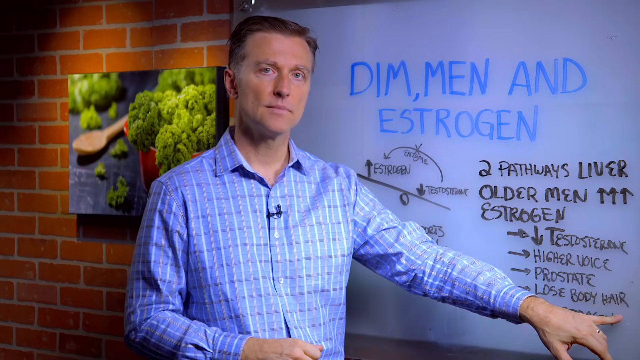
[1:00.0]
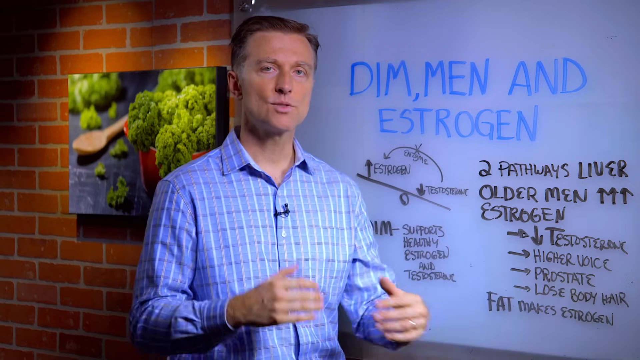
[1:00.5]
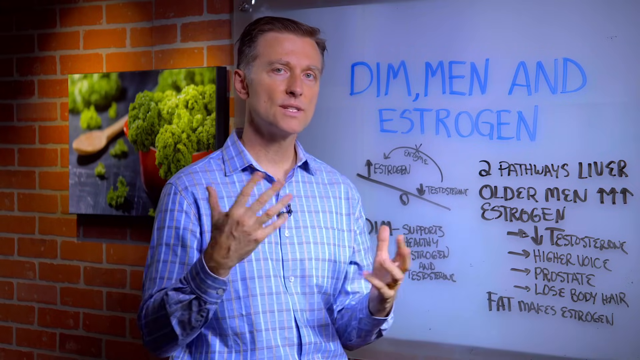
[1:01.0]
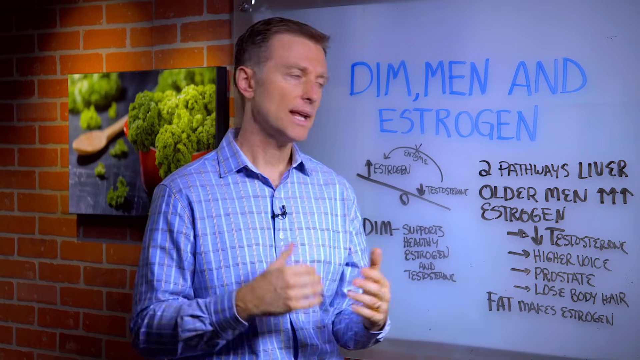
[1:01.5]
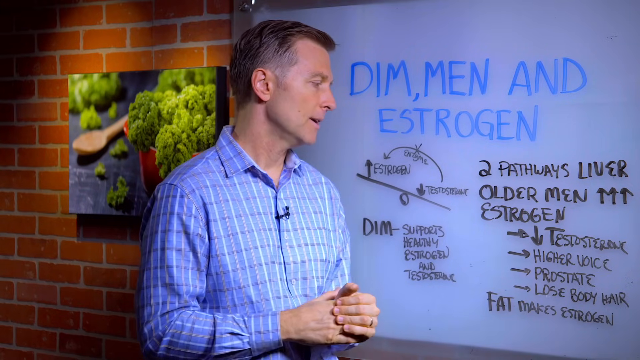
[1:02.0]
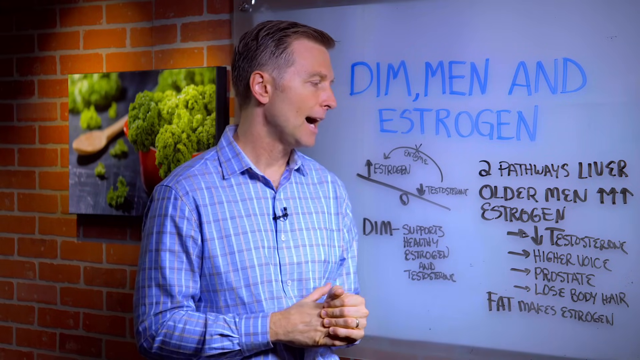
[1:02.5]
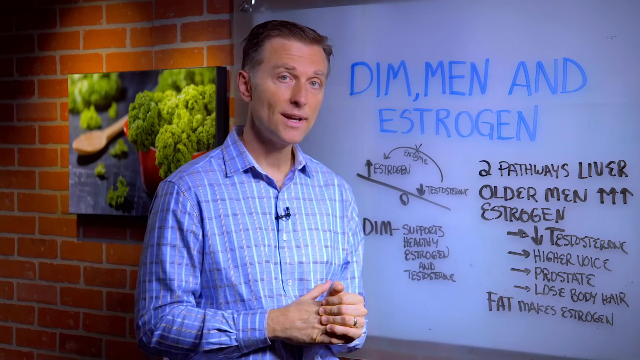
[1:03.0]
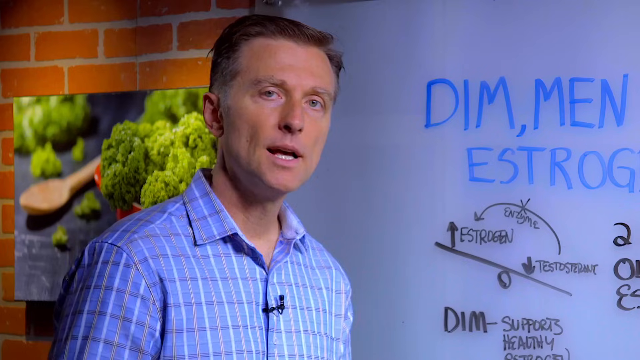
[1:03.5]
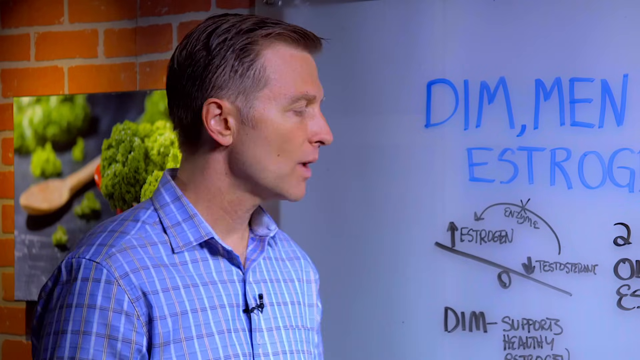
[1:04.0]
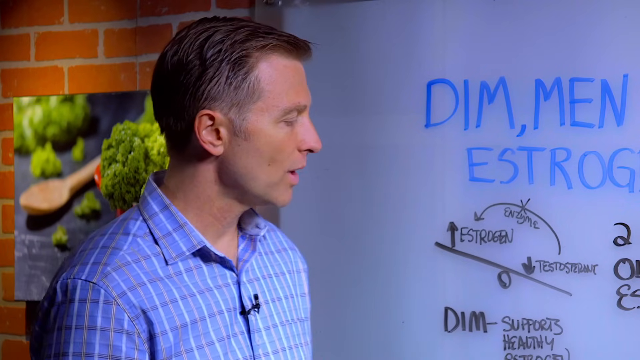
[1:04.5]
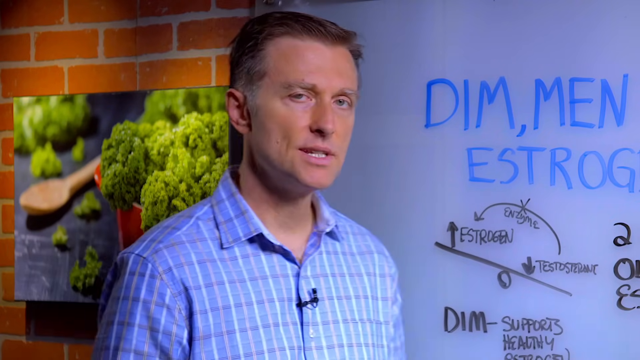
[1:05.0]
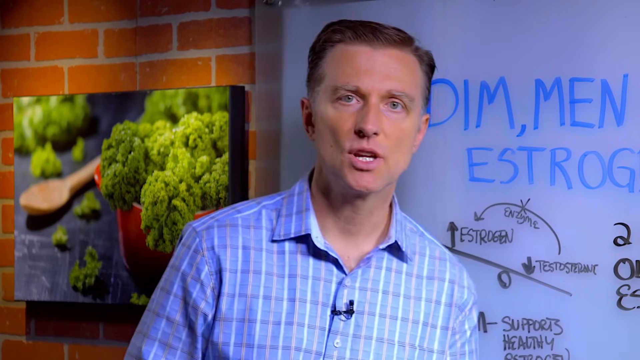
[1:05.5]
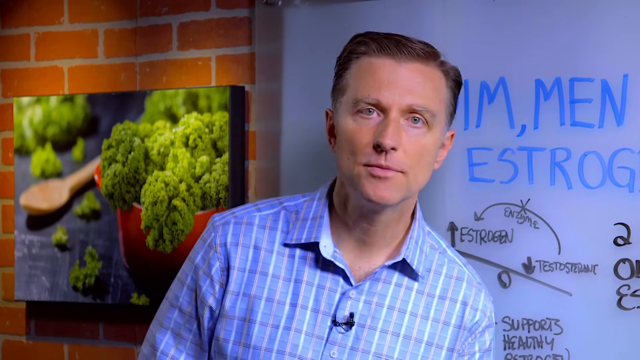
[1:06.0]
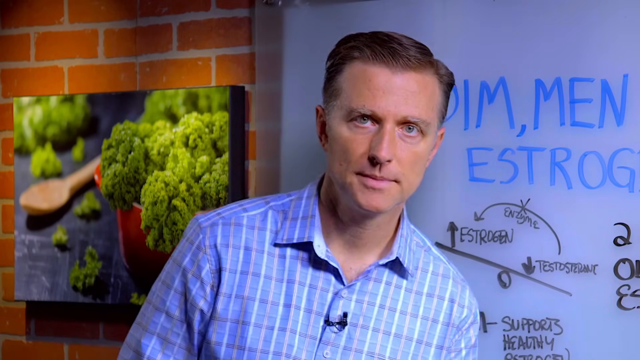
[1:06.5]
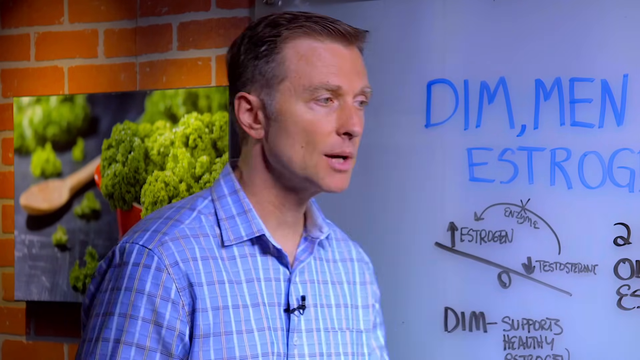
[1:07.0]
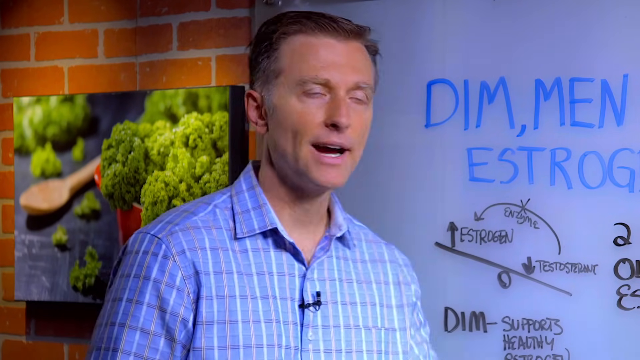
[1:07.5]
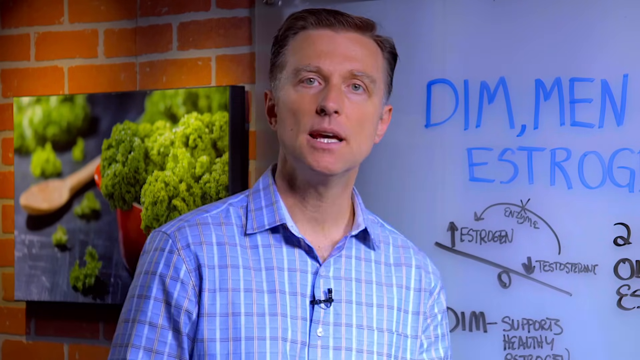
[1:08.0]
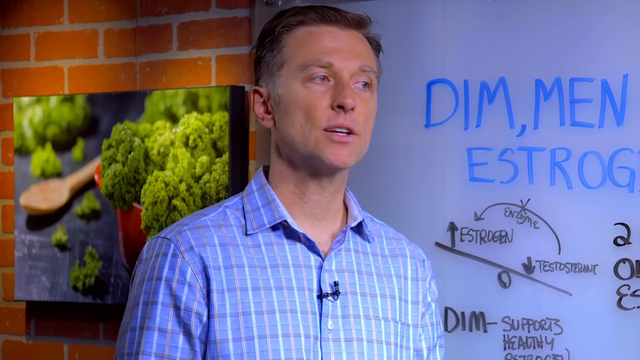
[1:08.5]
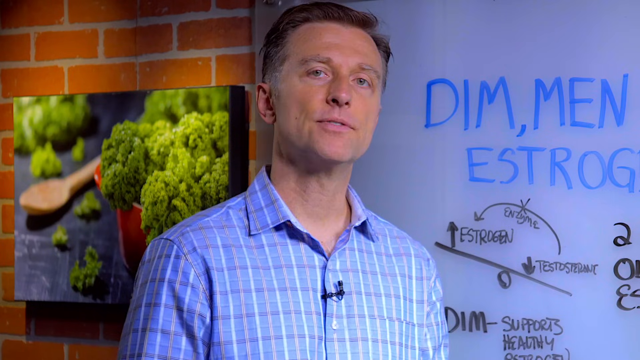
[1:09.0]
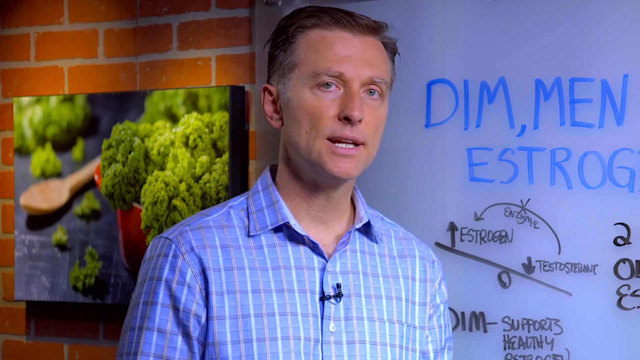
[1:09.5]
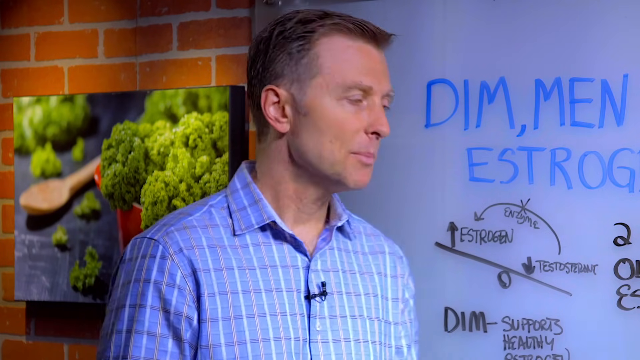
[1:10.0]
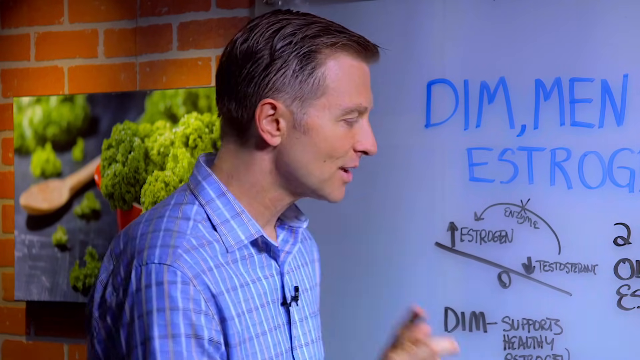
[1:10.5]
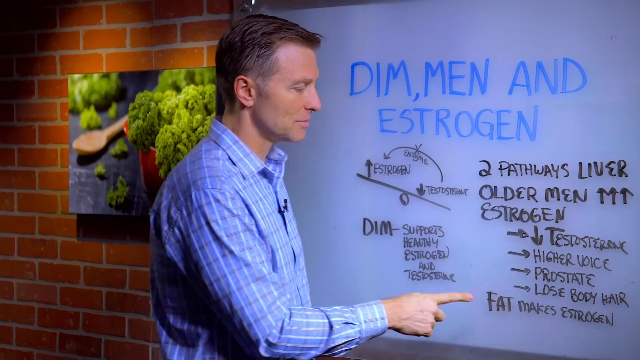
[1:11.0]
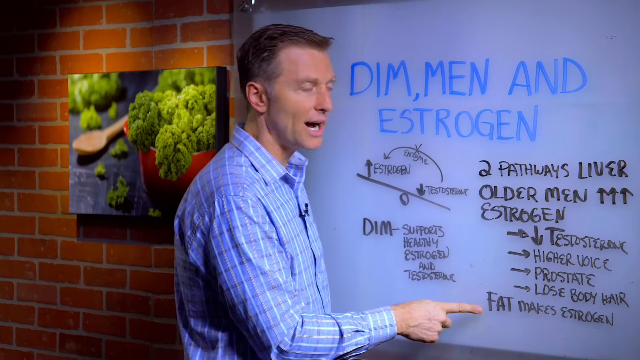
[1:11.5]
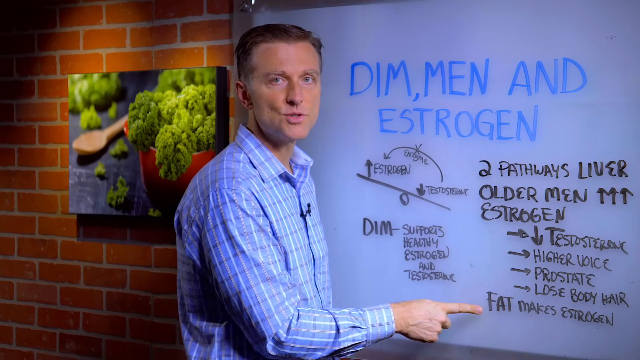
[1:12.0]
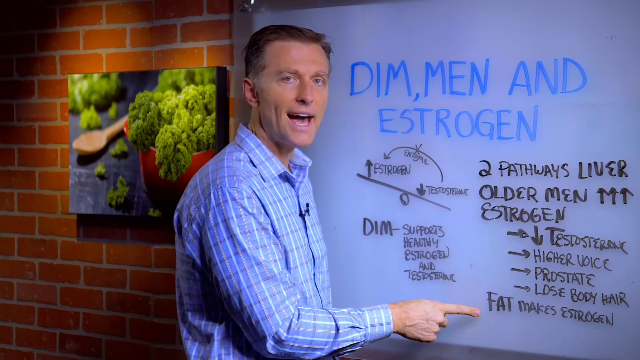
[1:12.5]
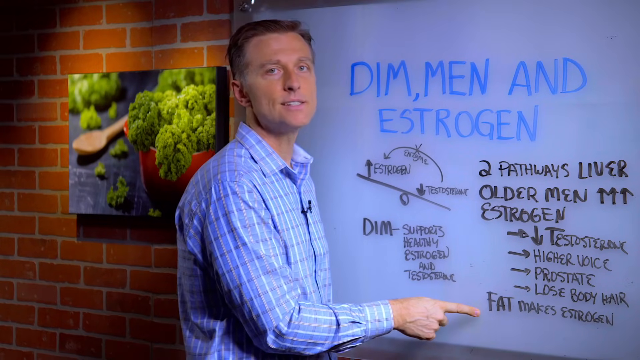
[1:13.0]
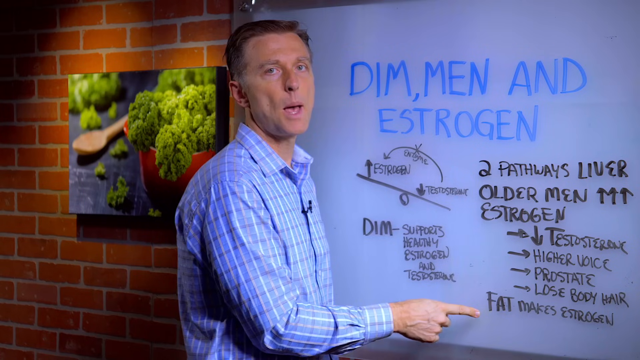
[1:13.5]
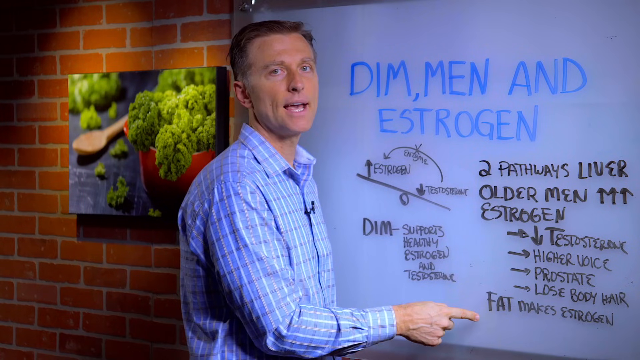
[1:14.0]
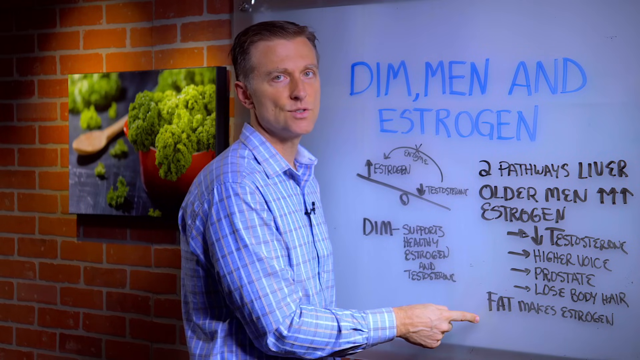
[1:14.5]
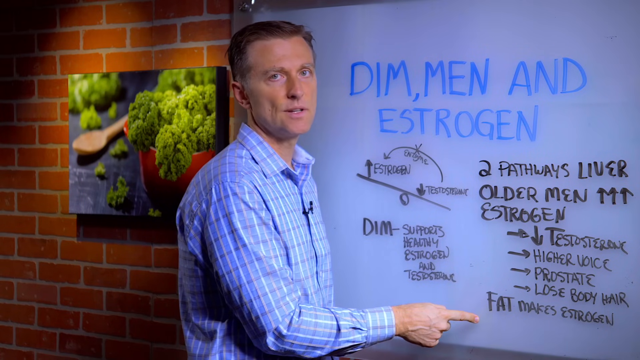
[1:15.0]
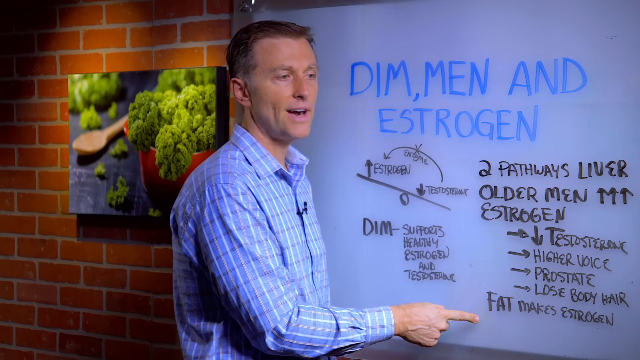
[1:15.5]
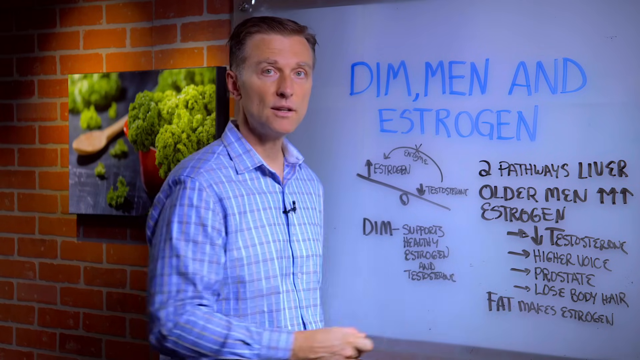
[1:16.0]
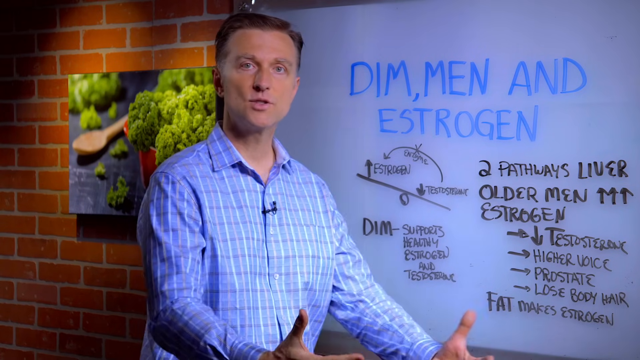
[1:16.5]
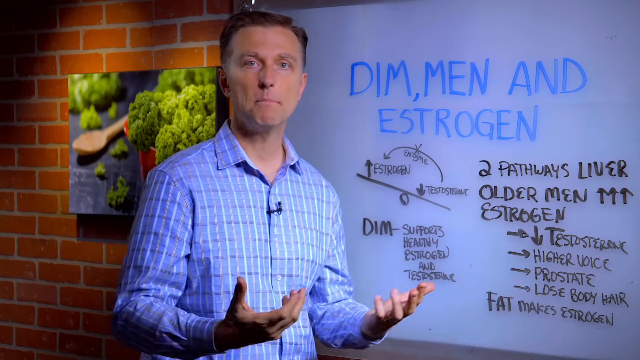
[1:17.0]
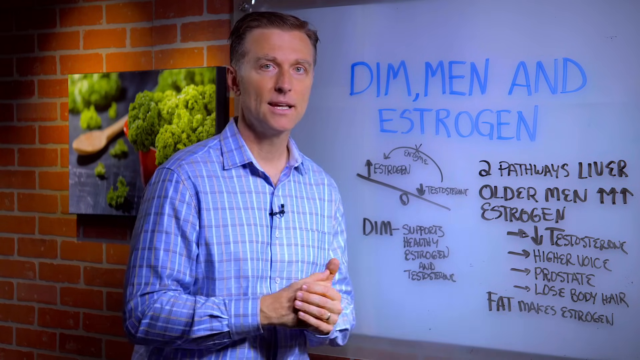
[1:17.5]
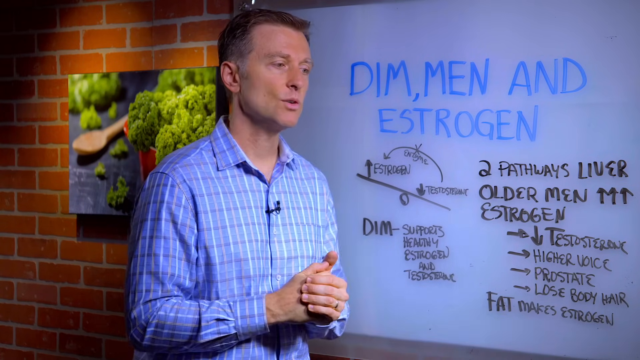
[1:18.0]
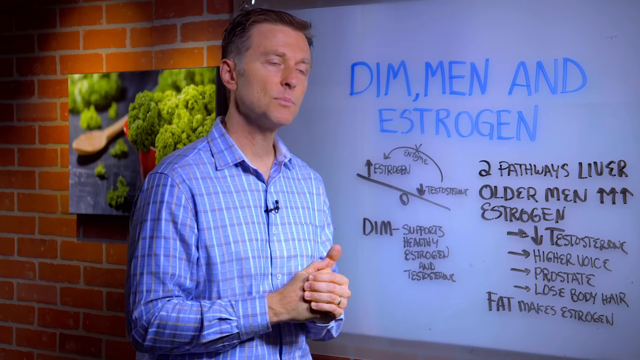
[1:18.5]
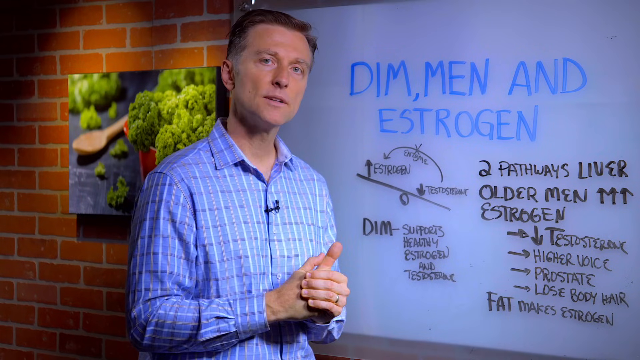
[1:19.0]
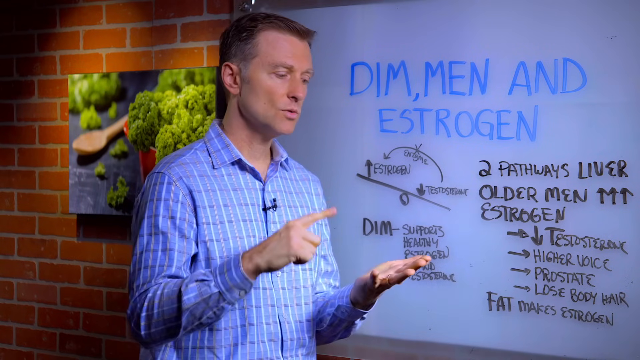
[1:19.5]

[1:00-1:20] A man in a blue plaited shirt, with a small black microphone clipped to his shirt, appears to be talking to the camera while moving his hands slightly. Directly behind him is a whiteboard with "DIM, men, and estrogen" in blue writing and additional information written below in black. He appears to be going over some of the information on the board and points to some of it. The camera then zooms in on him talking, and he again points to a position on the board, his arms moving as he describes things to the camera. He then holds up the palm of one hand and points out one of his fingers while looking back at the camera.